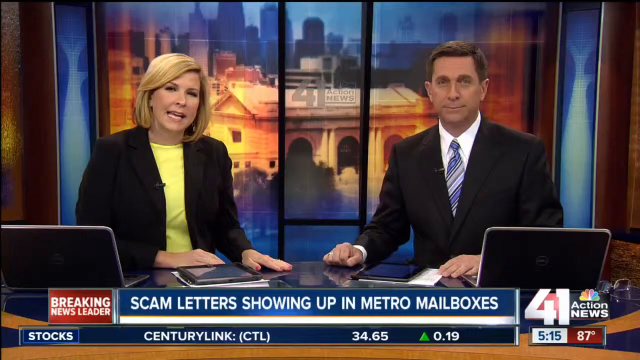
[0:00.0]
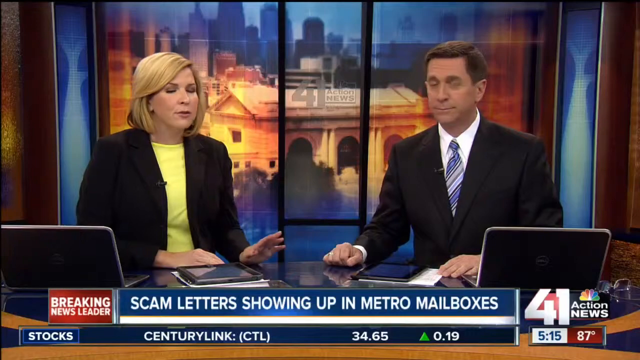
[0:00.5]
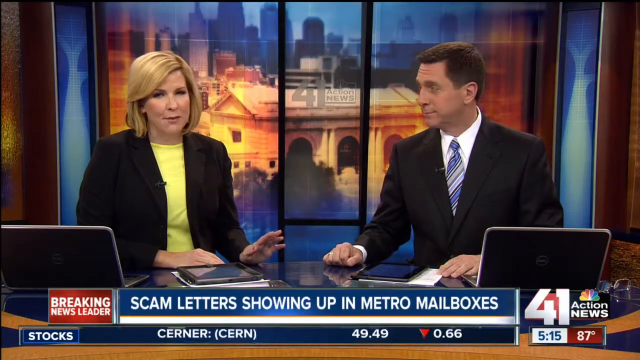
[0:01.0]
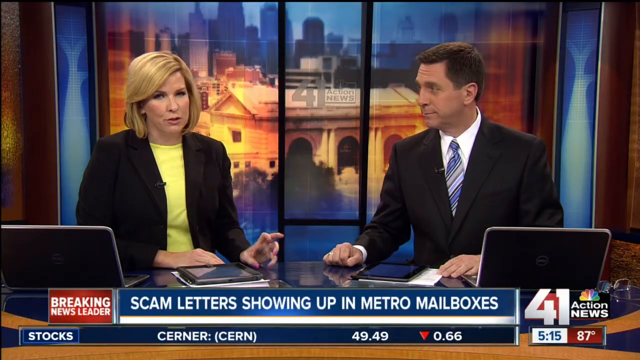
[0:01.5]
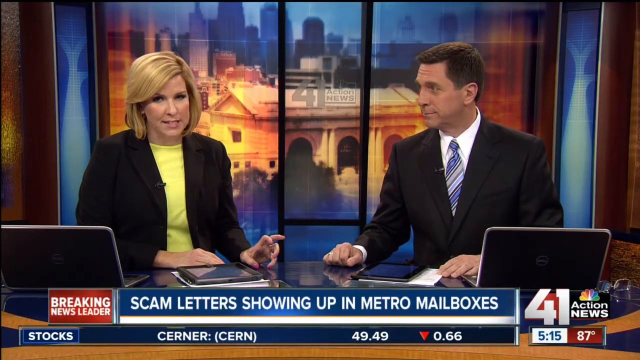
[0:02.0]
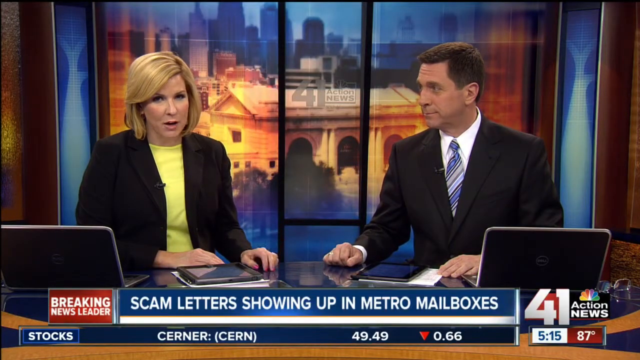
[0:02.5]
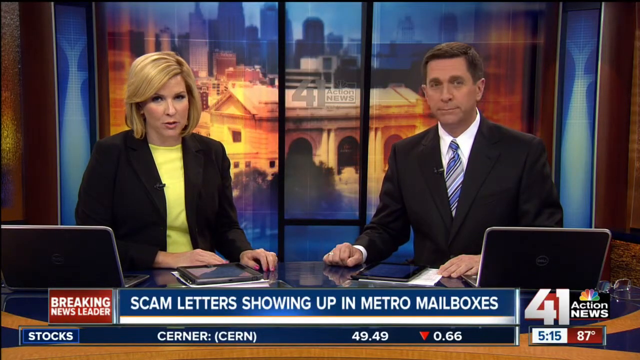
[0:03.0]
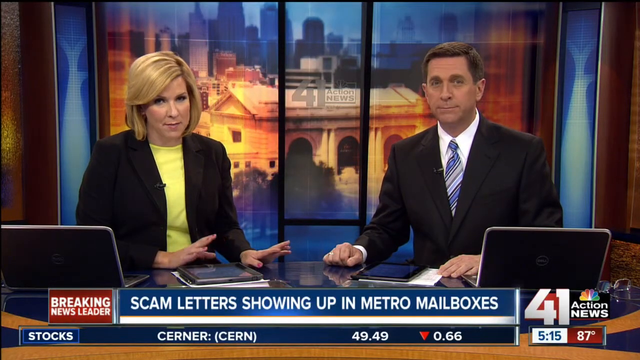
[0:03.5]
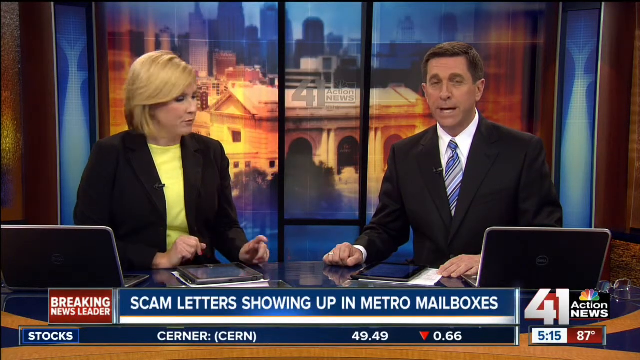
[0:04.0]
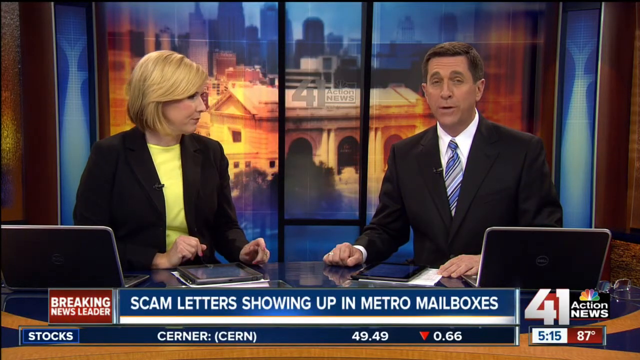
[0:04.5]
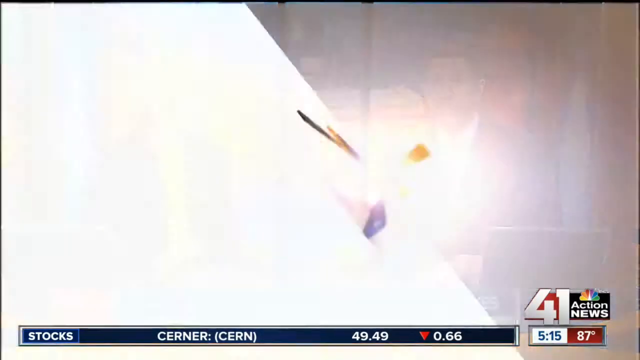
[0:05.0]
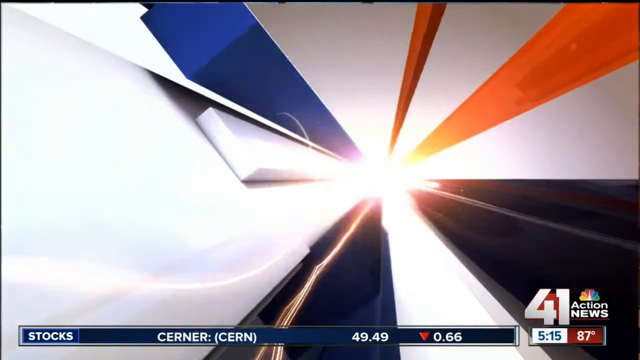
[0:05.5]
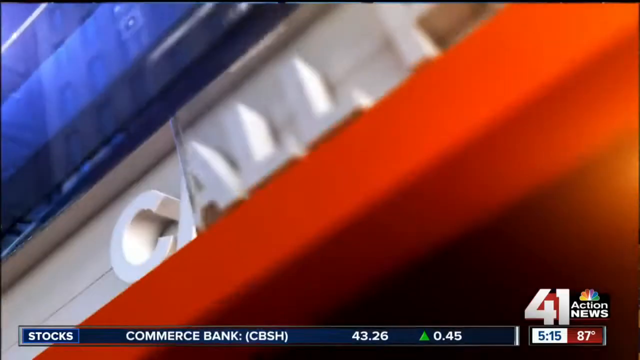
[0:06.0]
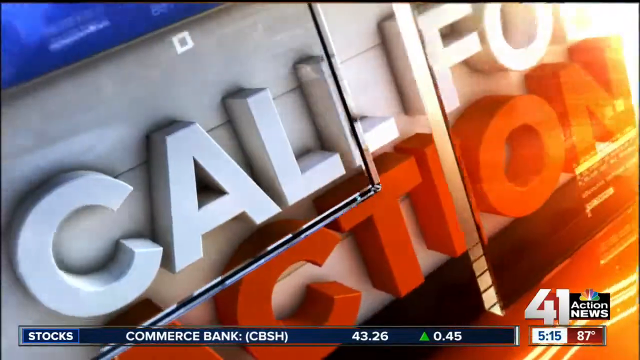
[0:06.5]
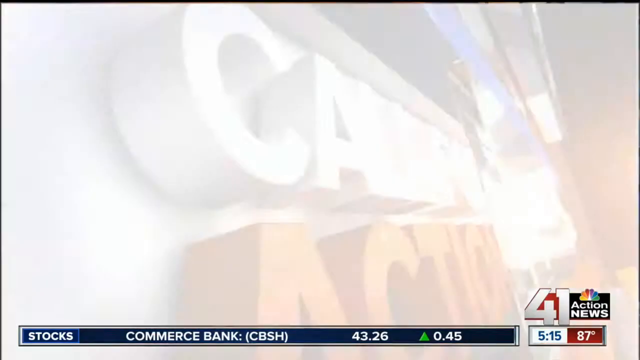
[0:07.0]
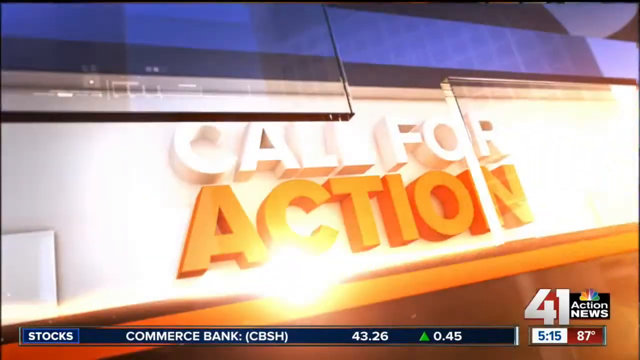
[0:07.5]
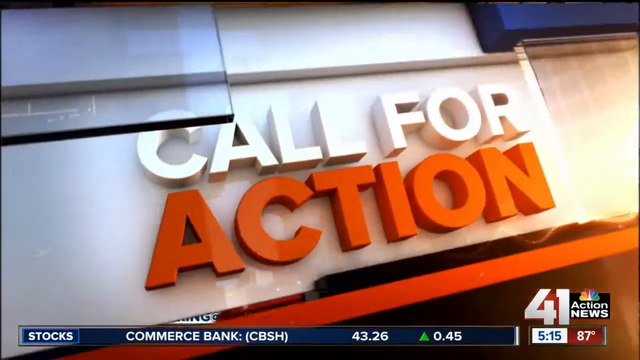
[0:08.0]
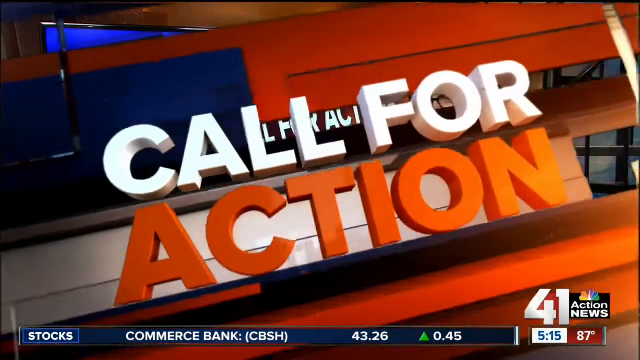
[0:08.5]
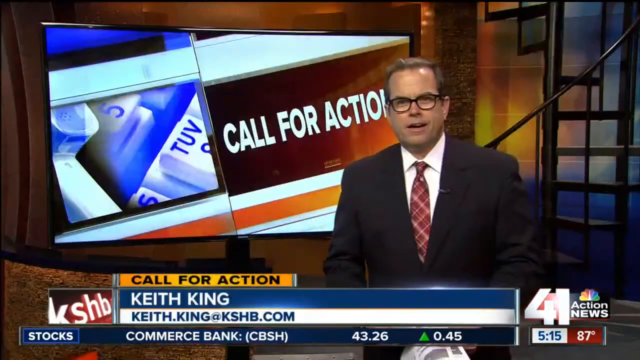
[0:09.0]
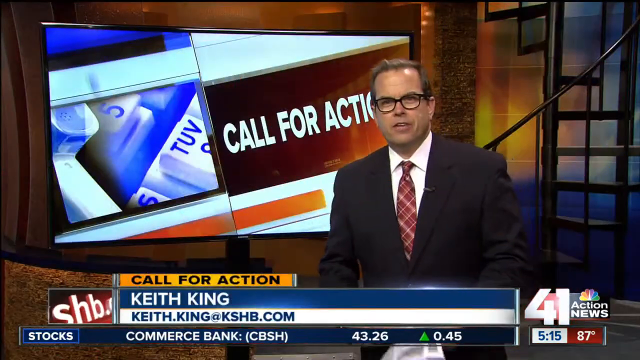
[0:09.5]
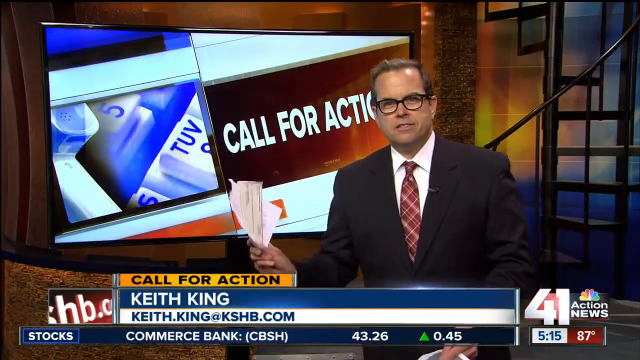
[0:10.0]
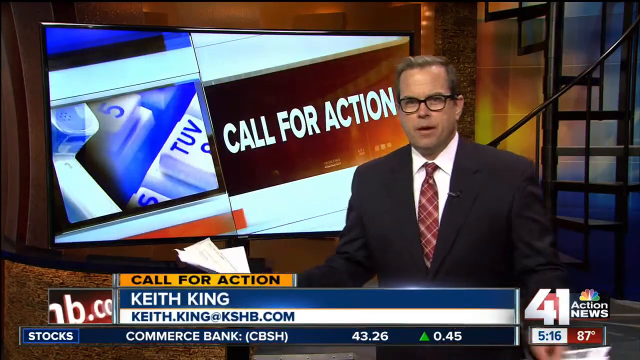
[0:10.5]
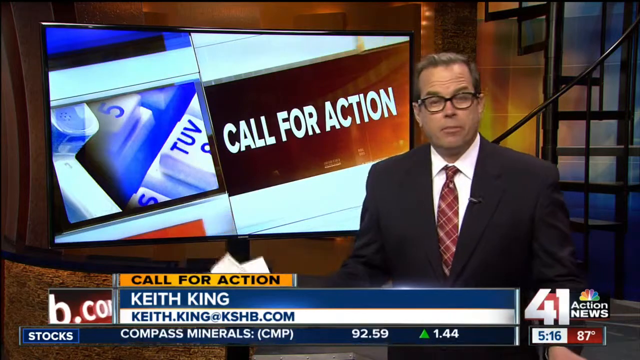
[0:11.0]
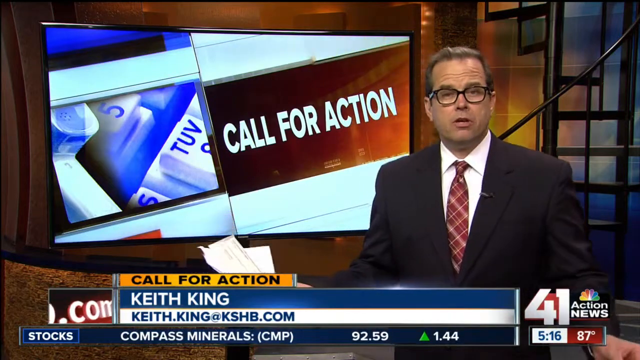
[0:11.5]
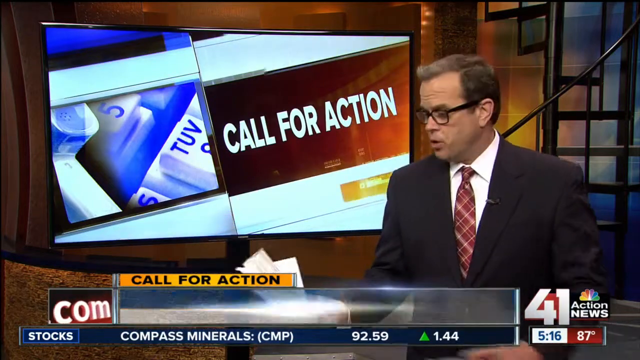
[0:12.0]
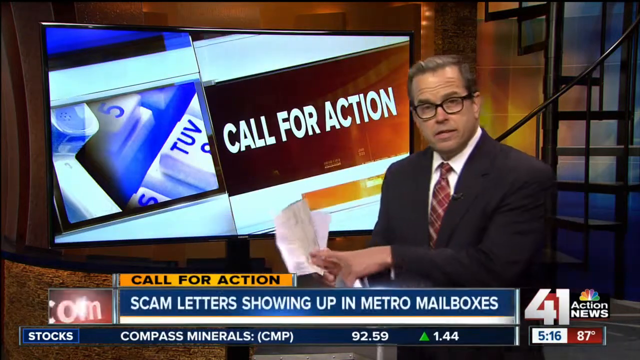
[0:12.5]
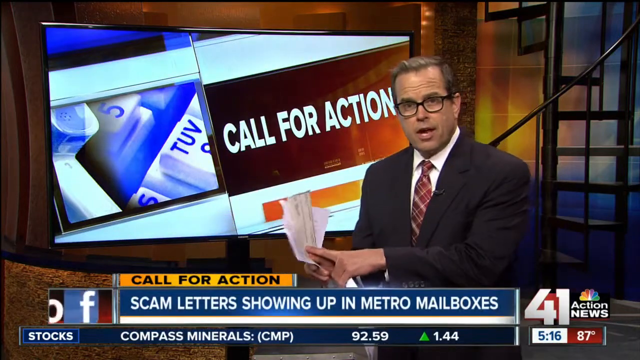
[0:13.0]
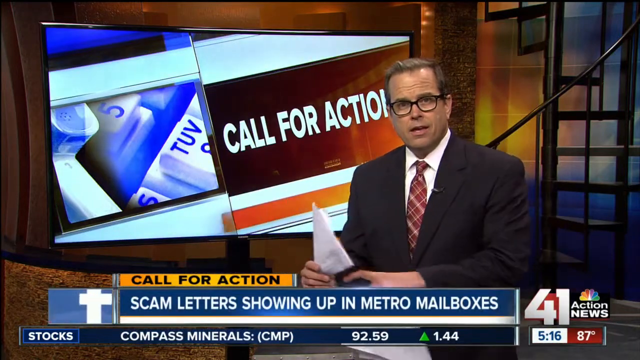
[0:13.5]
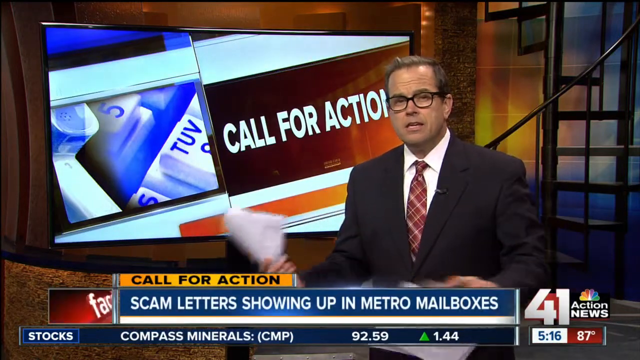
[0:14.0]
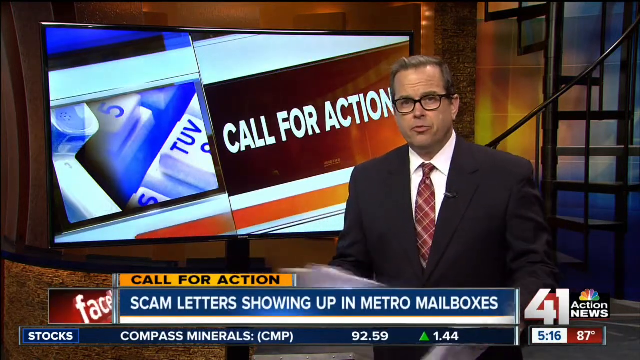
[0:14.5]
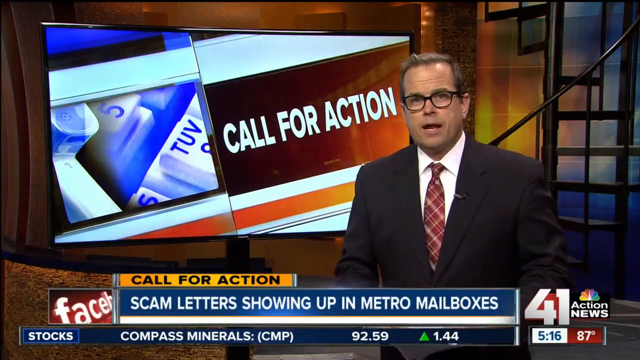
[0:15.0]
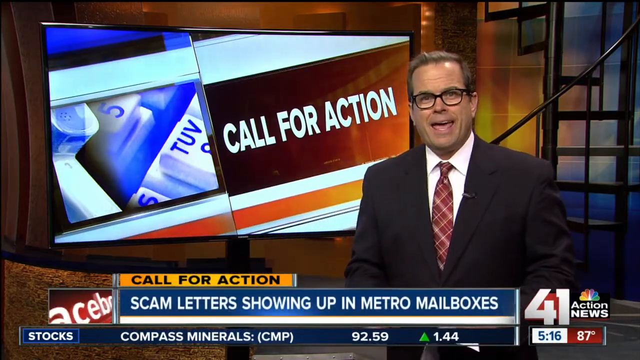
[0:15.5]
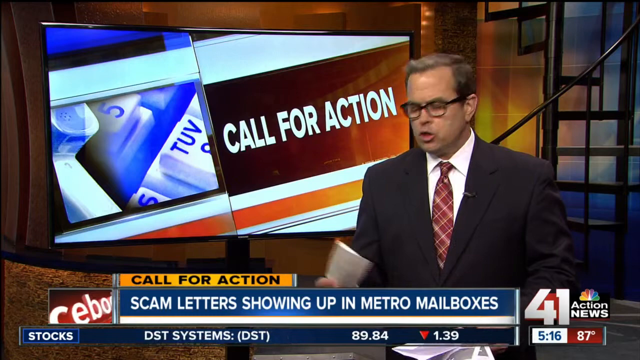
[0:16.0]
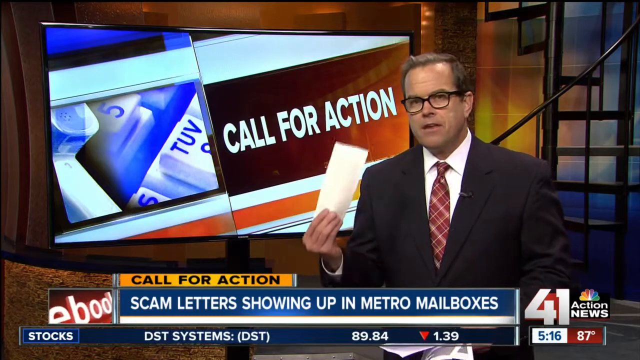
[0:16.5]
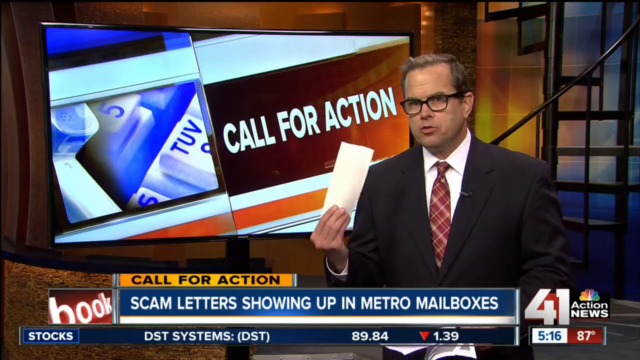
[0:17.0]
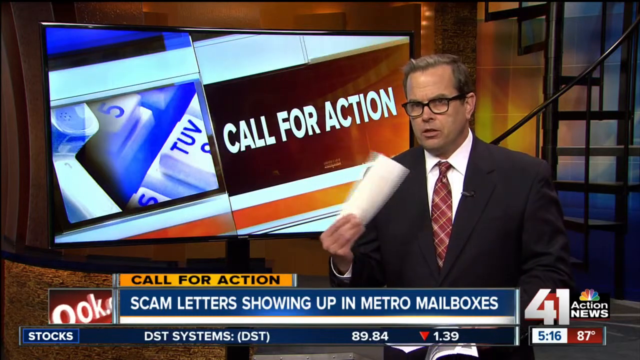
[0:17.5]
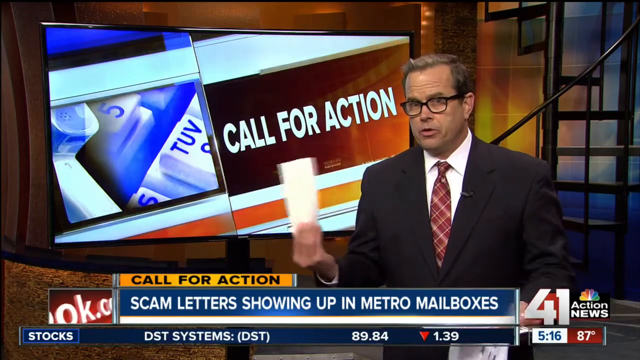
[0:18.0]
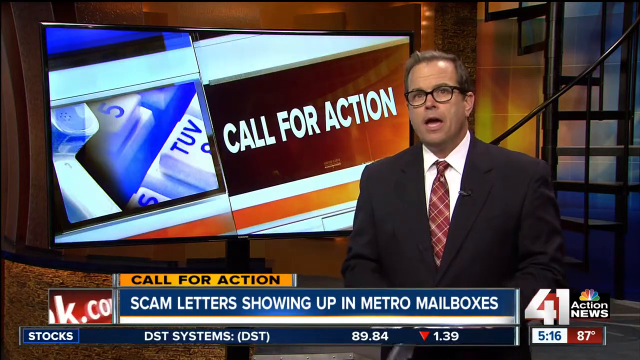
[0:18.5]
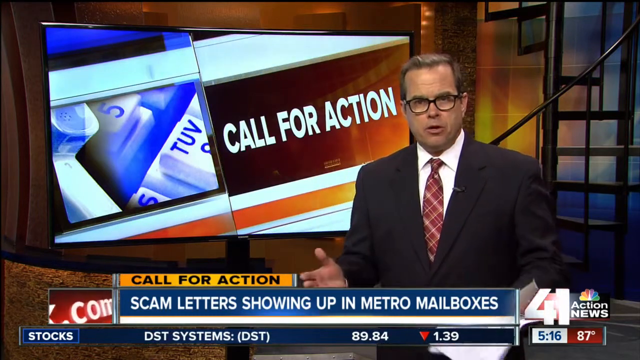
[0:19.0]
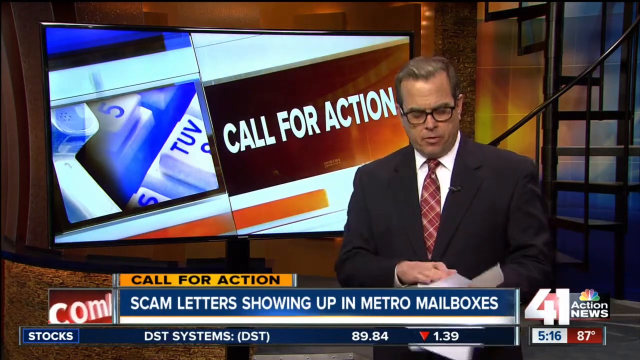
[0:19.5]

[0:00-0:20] A news broadcast is on screen, with the time 5.15 shown in the bottom right corner. Text below reads "scam letters showing up in Metro." Two presenters are in front of two black laptop screens, and their white tablets are on top of what looks like a screen. The man wears a black suit, white shirt and blue tie; the woman wears a black suit and a yellow shirt. Keith King addresses the call for action, and the big screen behind him shows the call for action.